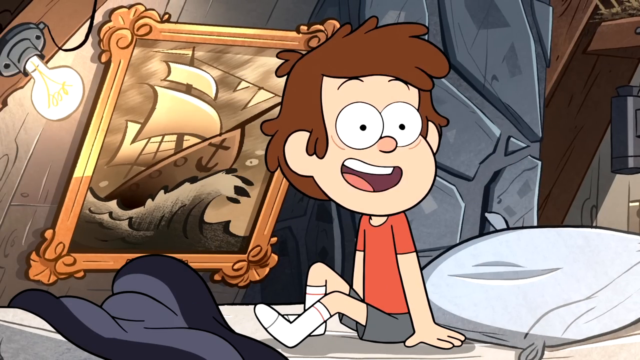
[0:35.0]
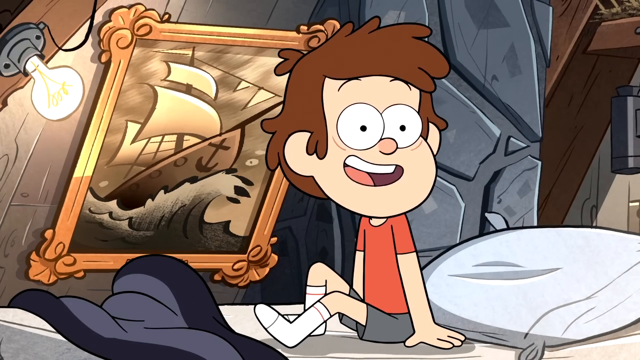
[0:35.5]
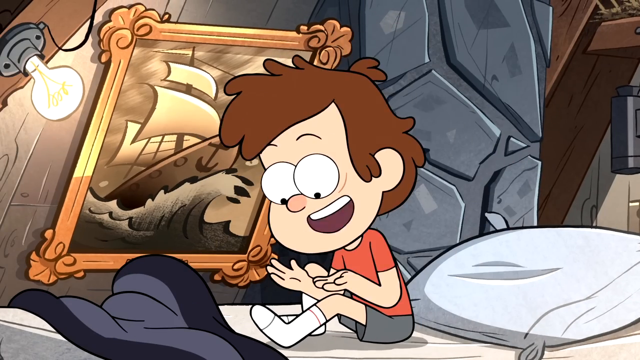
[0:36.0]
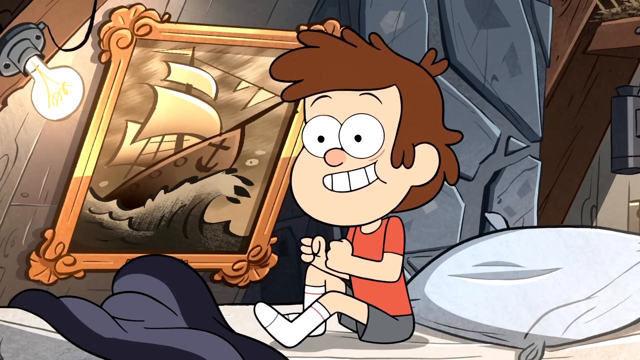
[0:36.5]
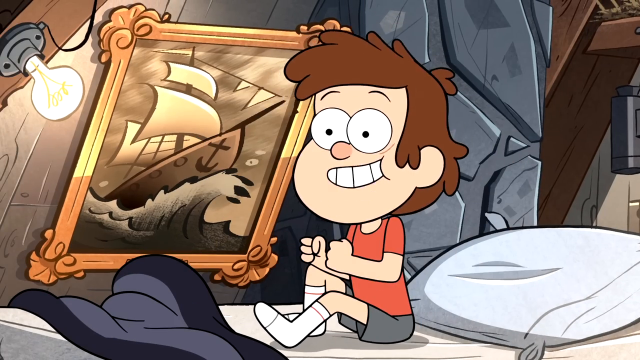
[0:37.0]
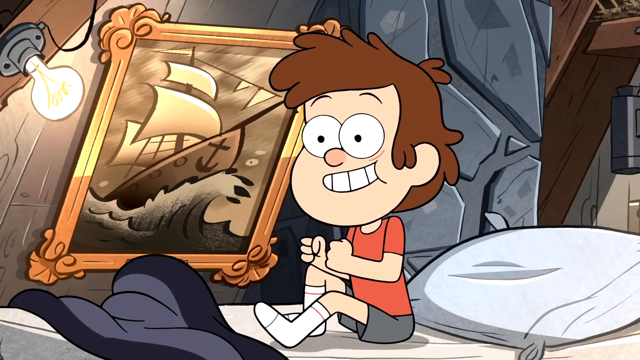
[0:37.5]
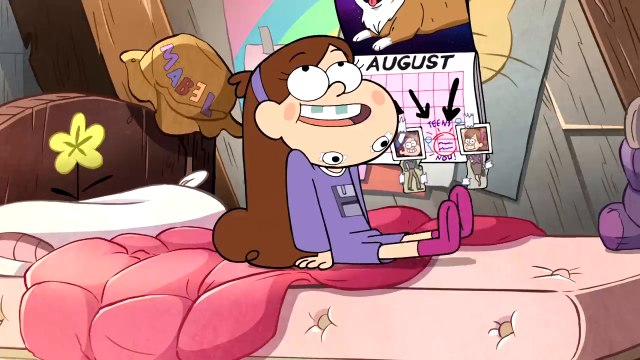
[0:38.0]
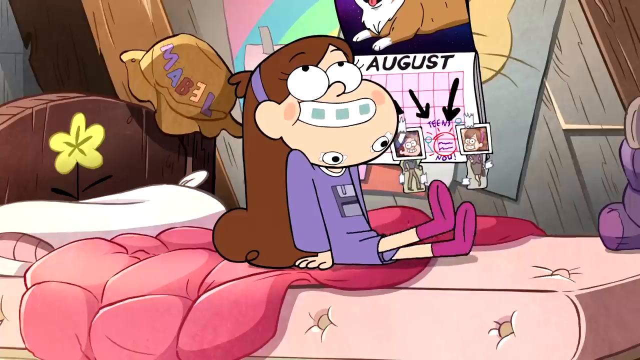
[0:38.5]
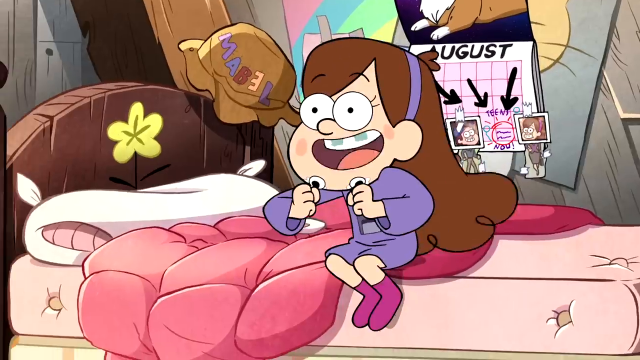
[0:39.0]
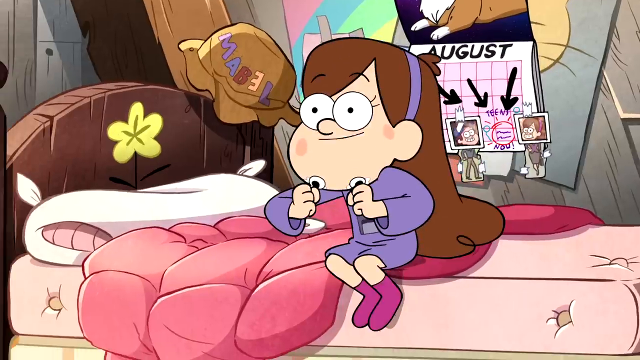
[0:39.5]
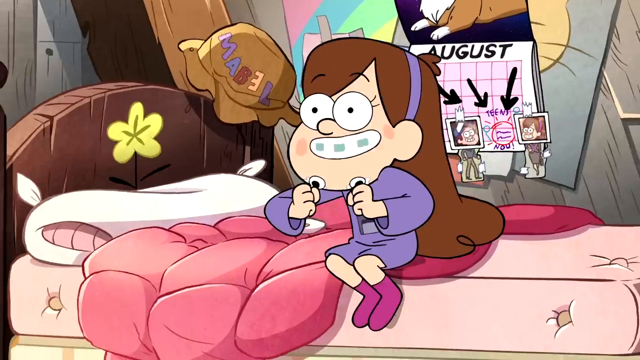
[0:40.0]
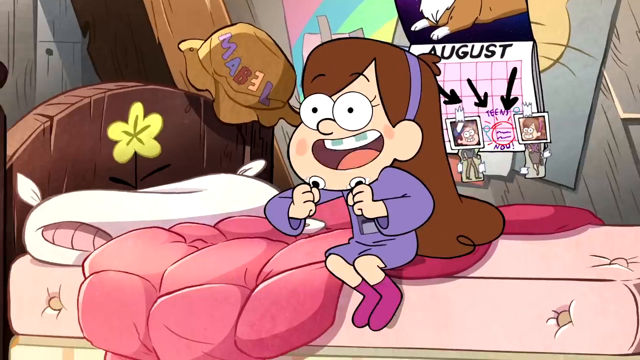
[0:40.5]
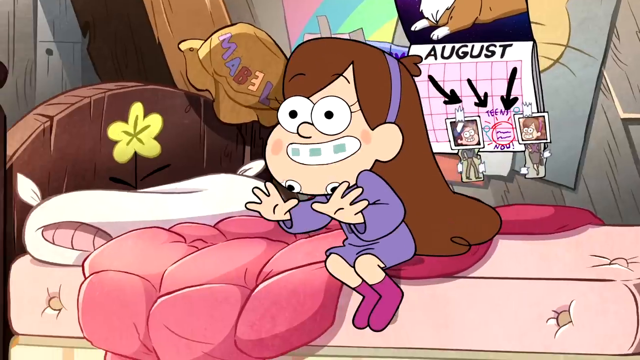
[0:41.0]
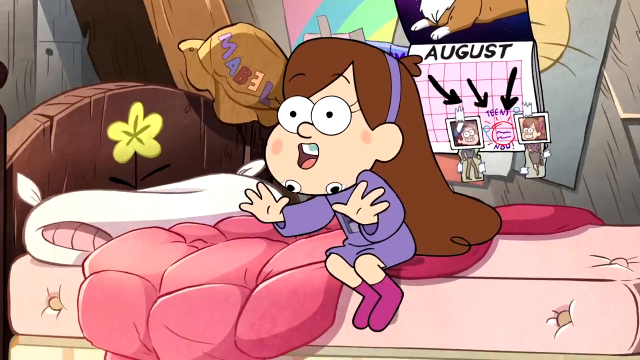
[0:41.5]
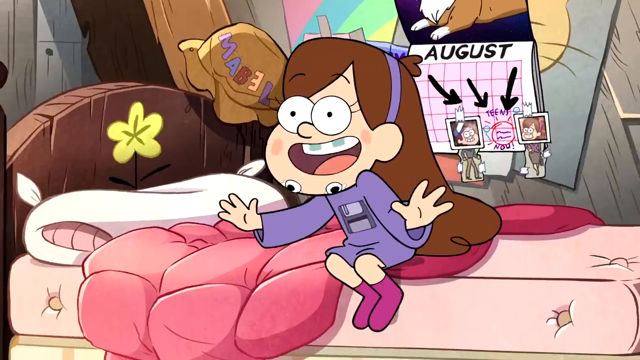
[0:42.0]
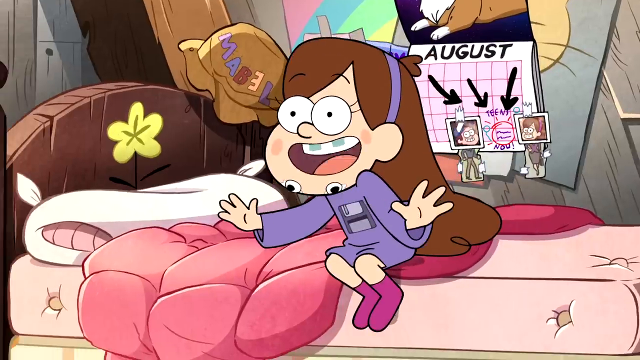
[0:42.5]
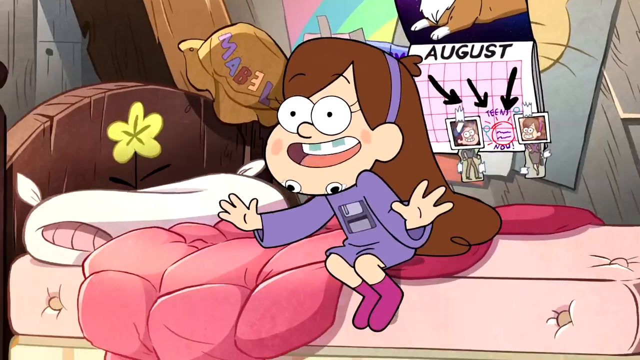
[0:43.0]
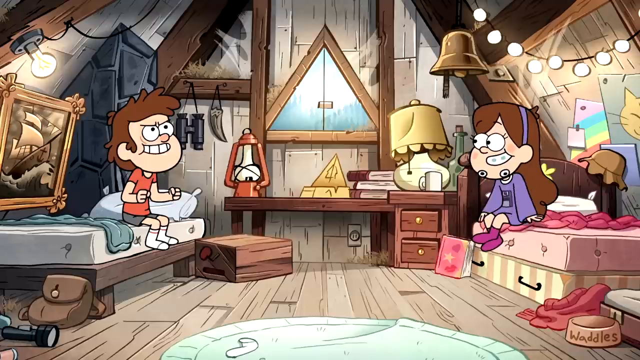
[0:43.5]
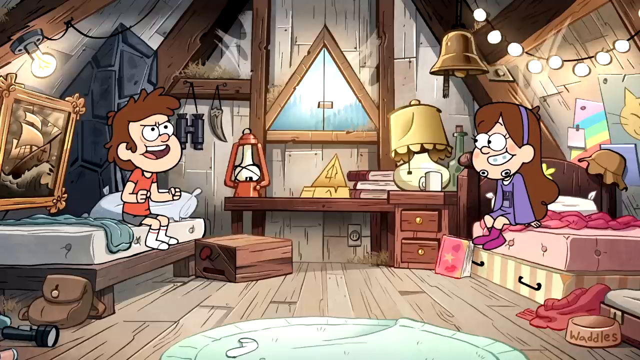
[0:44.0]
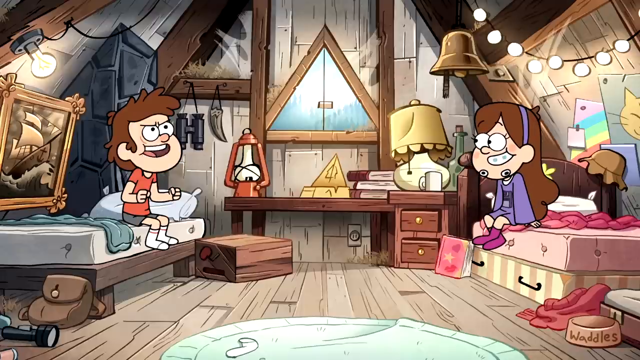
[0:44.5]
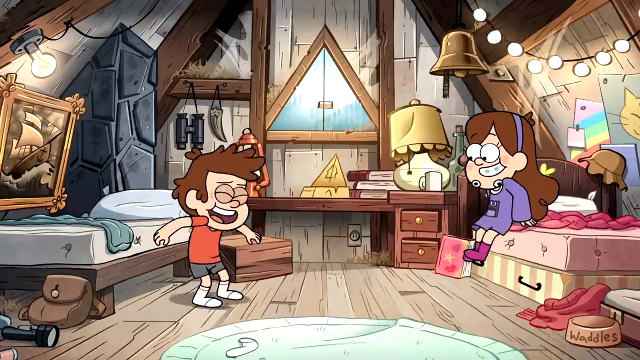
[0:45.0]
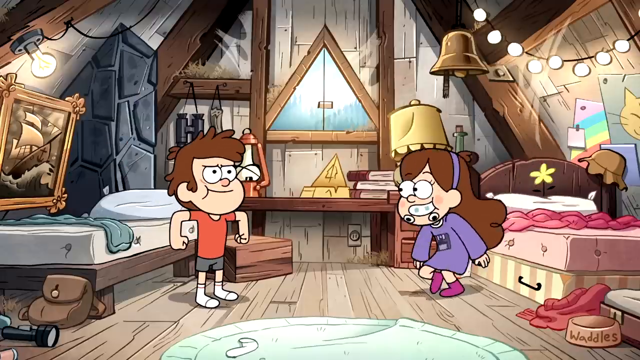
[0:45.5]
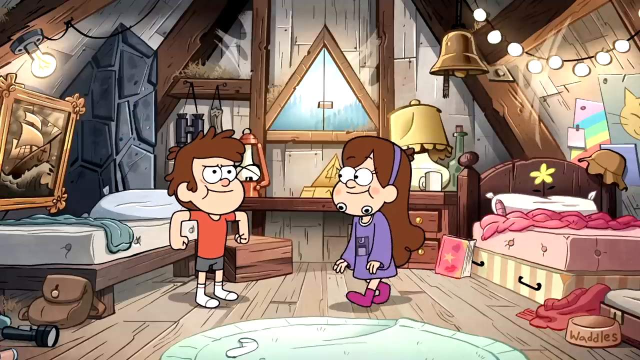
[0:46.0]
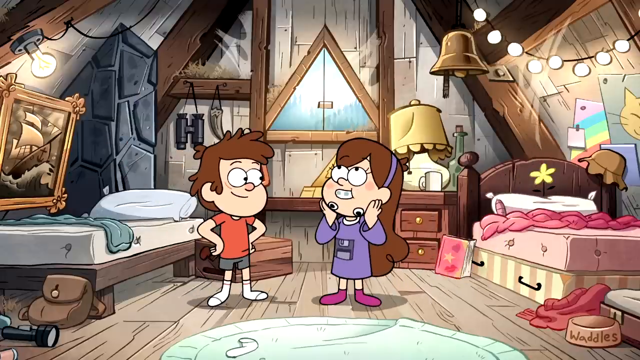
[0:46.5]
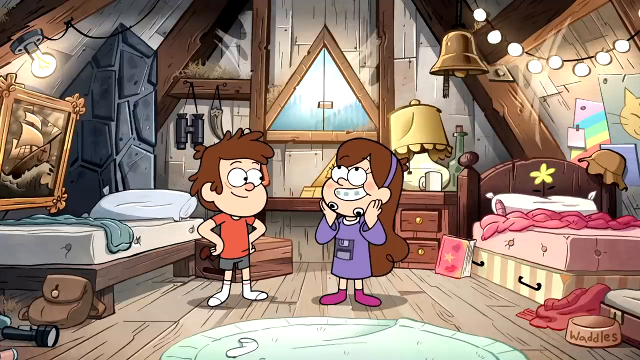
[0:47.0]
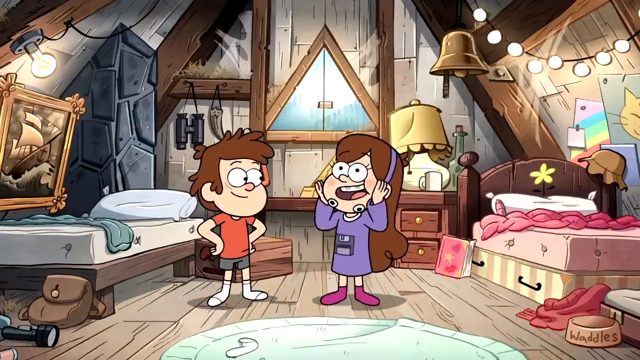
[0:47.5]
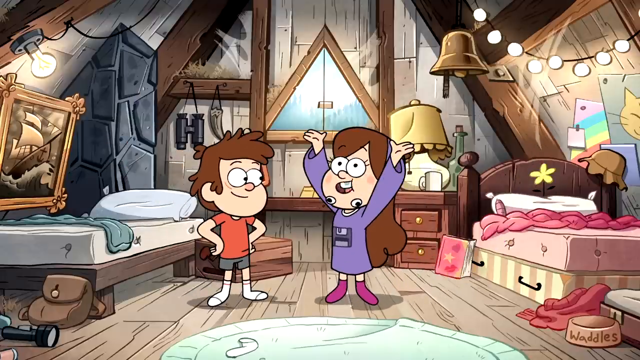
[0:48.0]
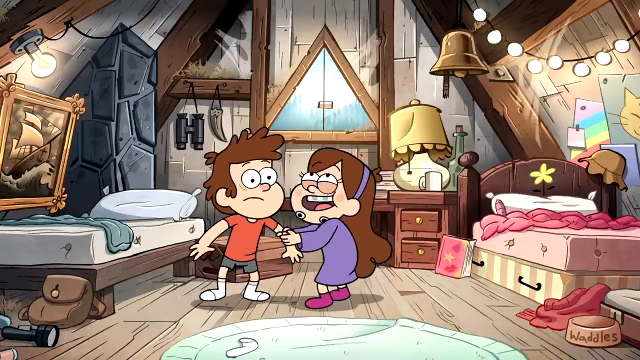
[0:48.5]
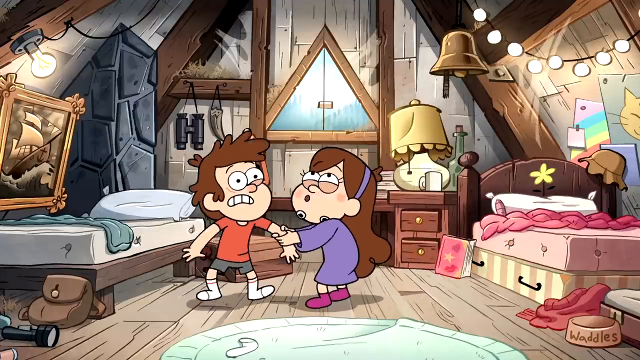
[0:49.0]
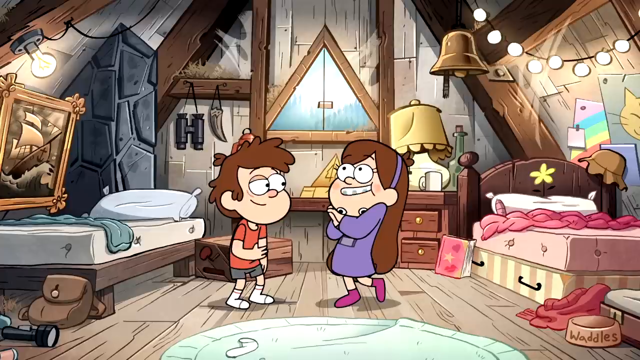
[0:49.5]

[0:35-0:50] The boy looks over towards the girl, then looks at his hands on the bed, kind of in amazement, as he keeps talking and clenches his fist. The girl is on her own salmon pink bed with a darker pinkish red comforter. She is slightly lying down, then jumps up in happiness, smiling and clenching her fists; her hair moves and her legs are against the mattress. She keeps talking to the boy, opening her hands and moving them in excitement. A shot shows both of them sitting on their beds, the boy on the left side of the room and the girl on the right, looking at each other. The boy looks slightly angry but happy at the same time. He jumps onto the floor with his fists closed and arms out, looking very happily at the girl, who has her hands on her face and is looking upwards and talking. She puts her hands up in the air in happiness, grabs onto the boy's arm to push him close to her and starts to shake him. The boy is then shown lying in bed talking, his hands out and clenching his fists, while the girl also clenches her fists.